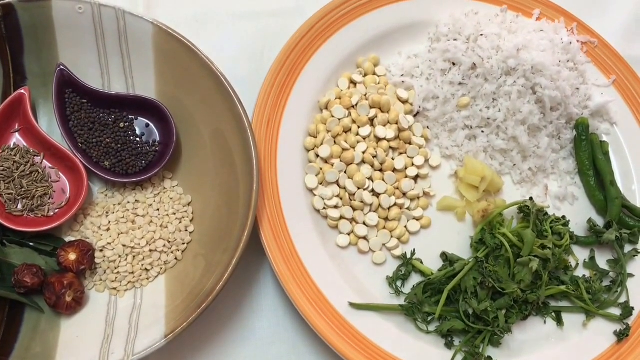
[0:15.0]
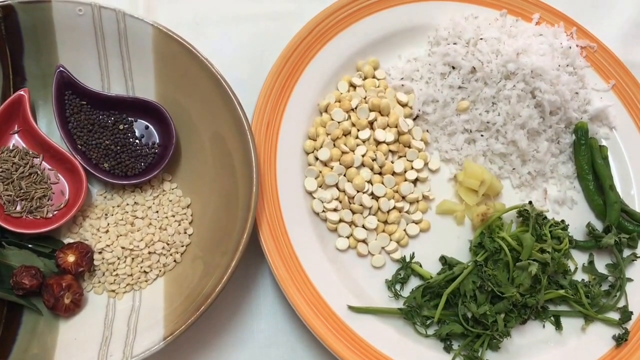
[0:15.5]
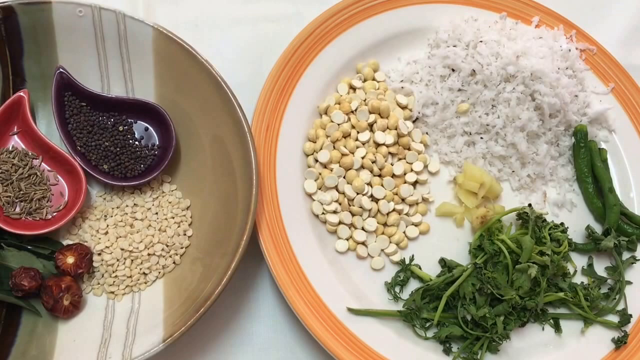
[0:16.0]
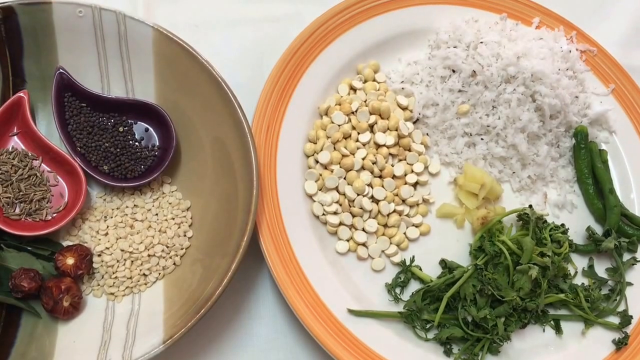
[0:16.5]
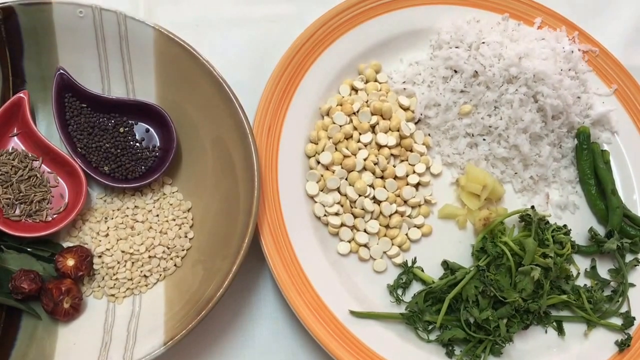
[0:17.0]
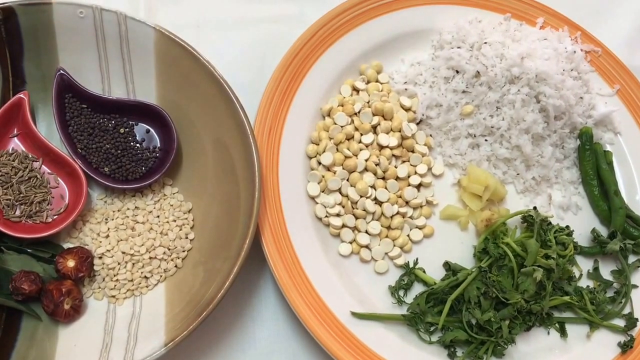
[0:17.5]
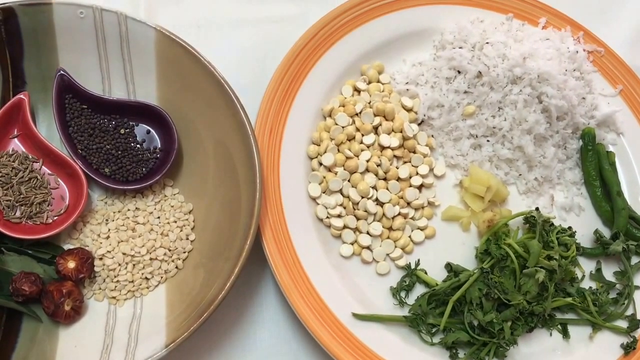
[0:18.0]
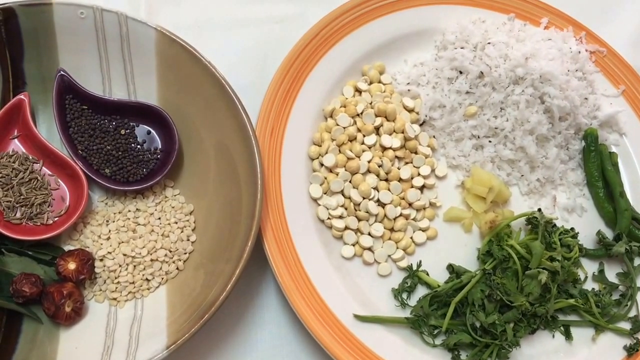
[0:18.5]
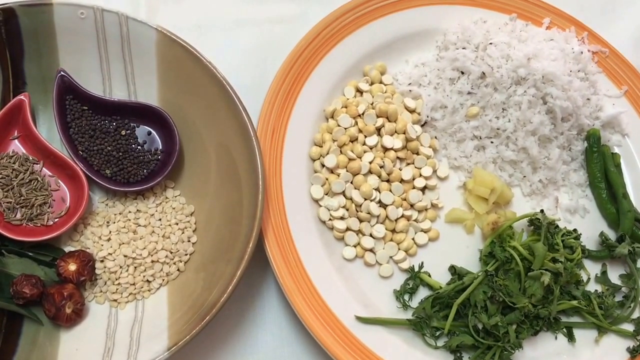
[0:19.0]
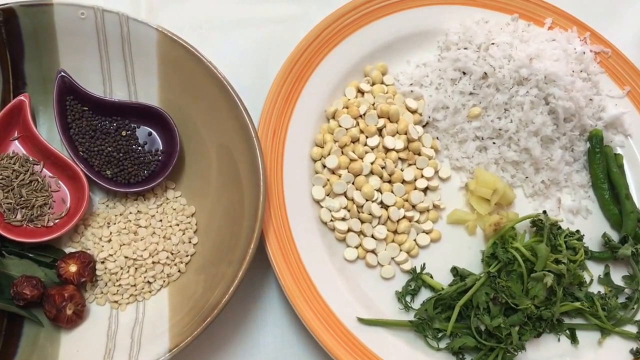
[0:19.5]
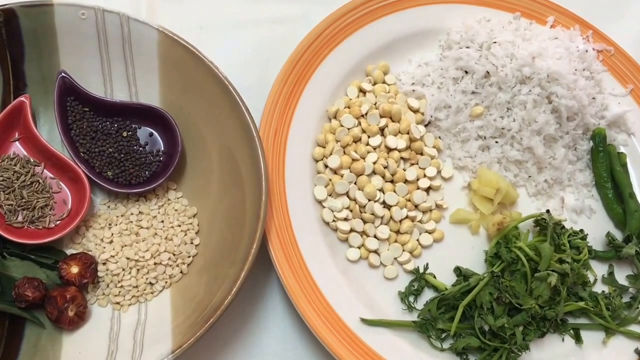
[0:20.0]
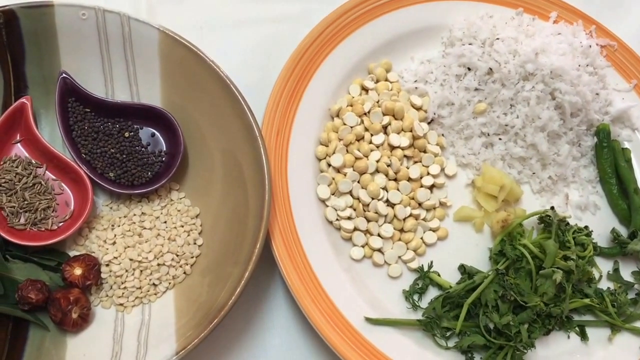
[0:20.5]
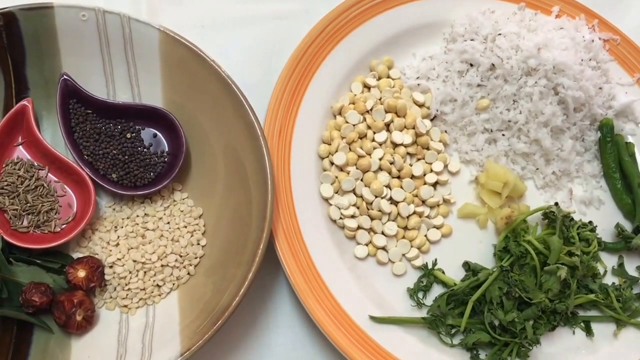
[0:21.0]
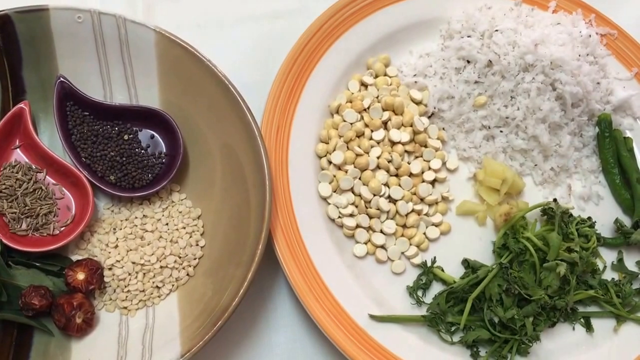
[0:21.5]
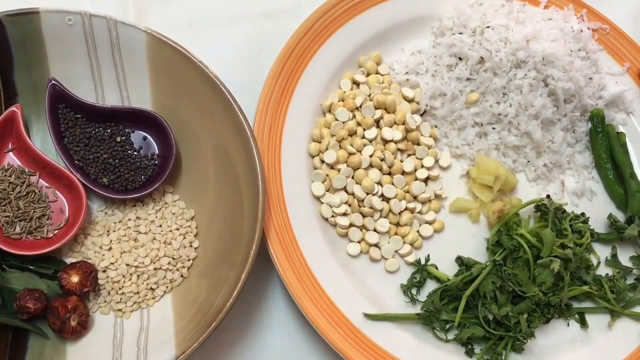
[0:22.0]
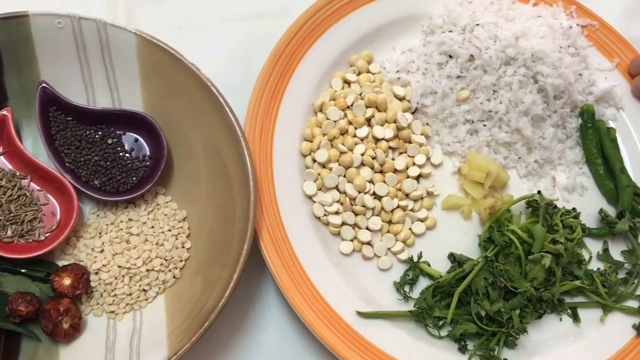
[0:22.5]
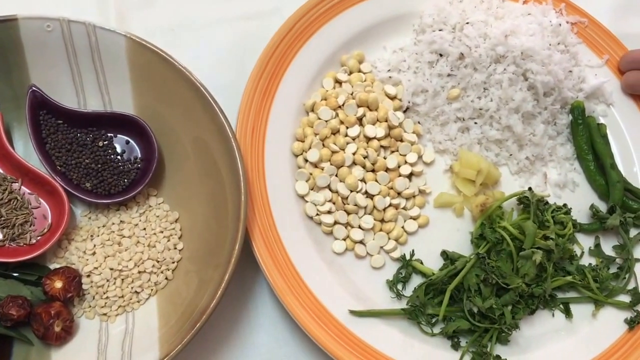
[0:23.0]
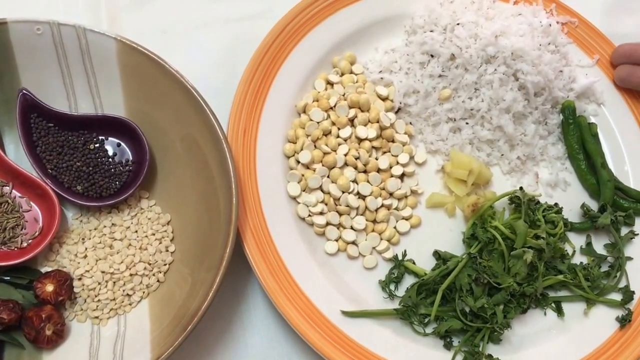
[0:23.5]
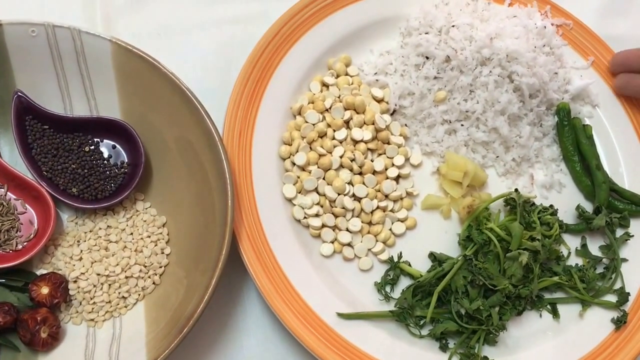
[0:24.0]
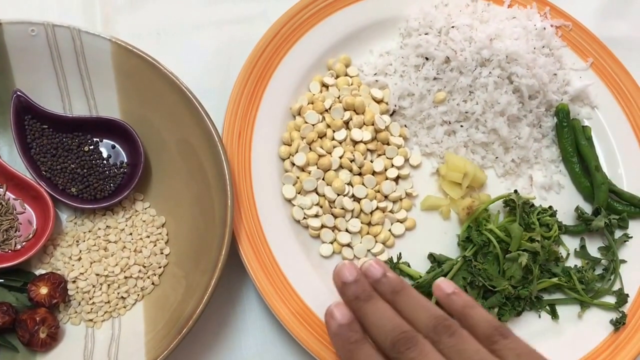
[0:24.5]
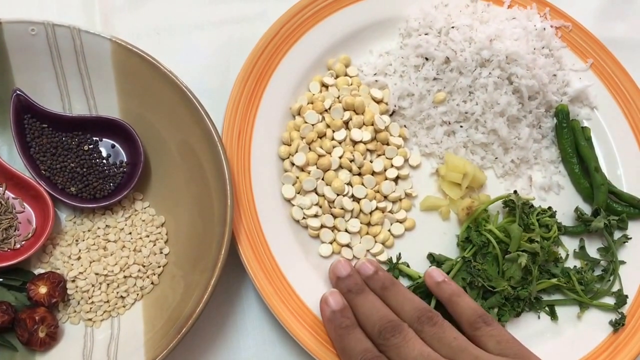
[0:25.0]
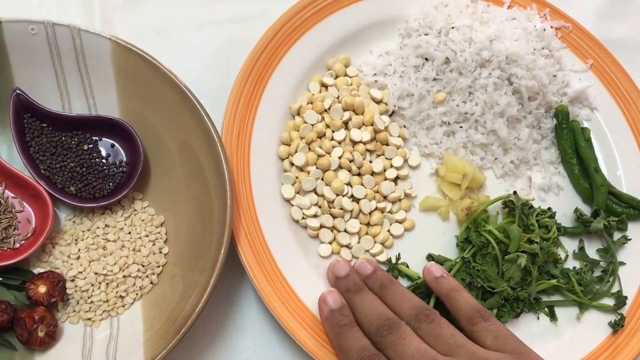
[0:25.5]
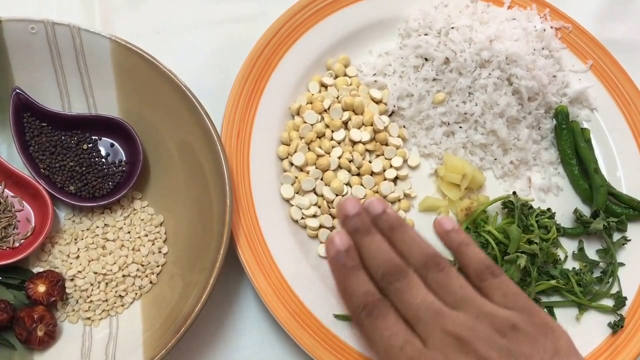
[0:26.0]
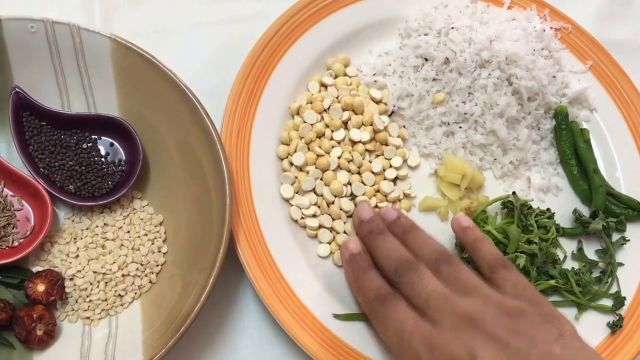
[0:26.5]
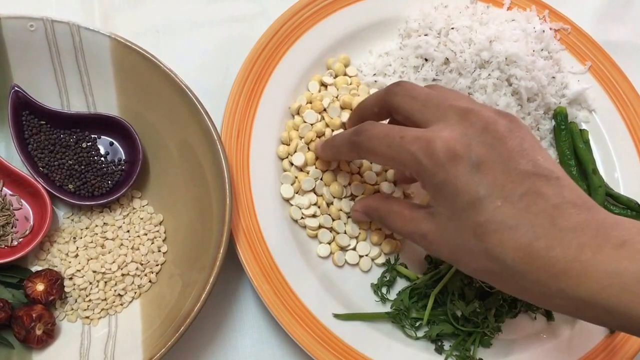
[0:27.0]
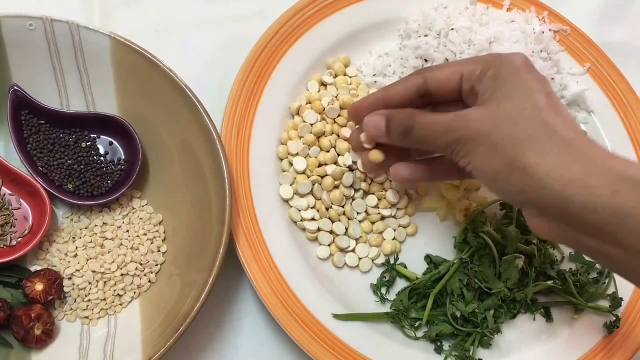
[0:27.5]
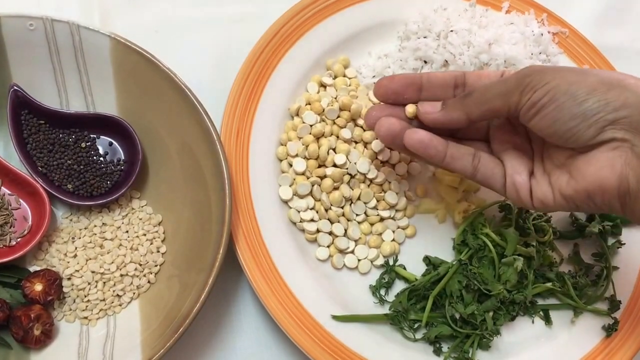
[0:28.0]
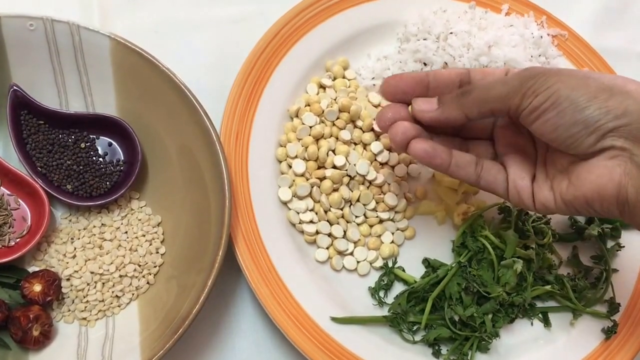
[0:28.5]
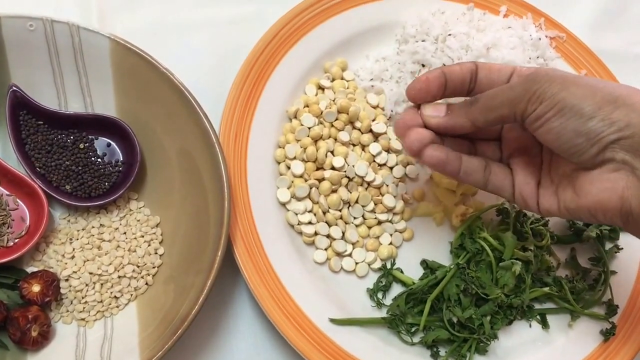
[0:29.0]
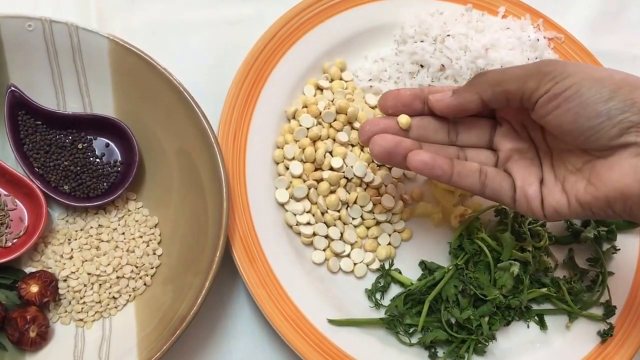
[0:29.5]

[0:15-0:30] A mise en place of what appear to be ingredients for some sort of chutney is split between two plates, probably eight or nine ingredients in all. They look fresh and colorful, and each ingredient is kept to itself. There are spices, including black peppercorns, perhaps some ginger, possibly green beans, maybe coconut, another green that seems to be cilantro, what look like lentils, and possibly some sort of pepper or something similar.